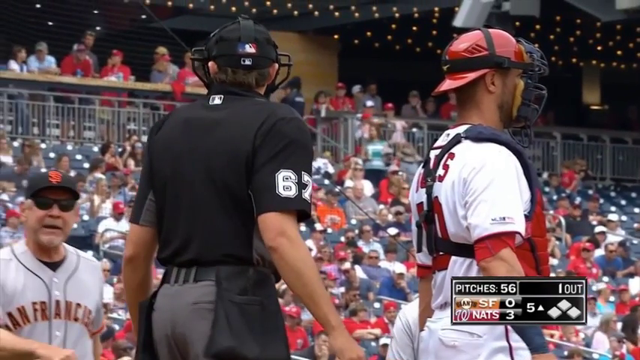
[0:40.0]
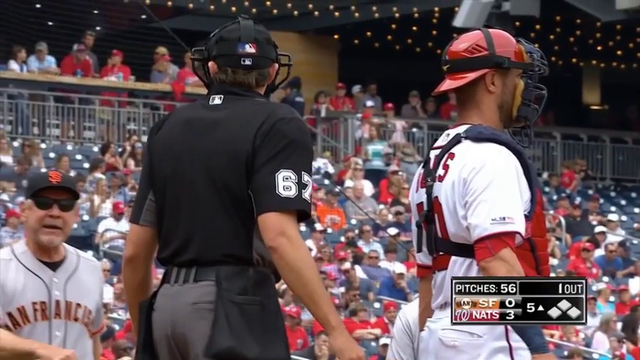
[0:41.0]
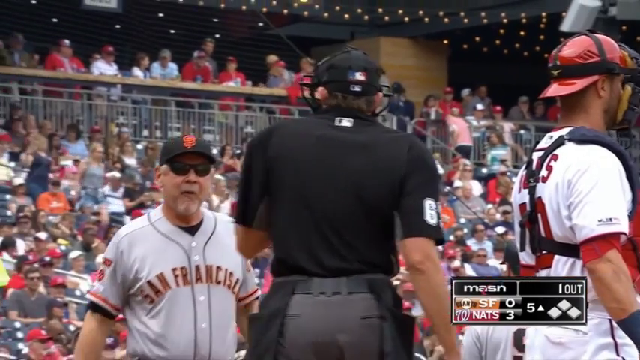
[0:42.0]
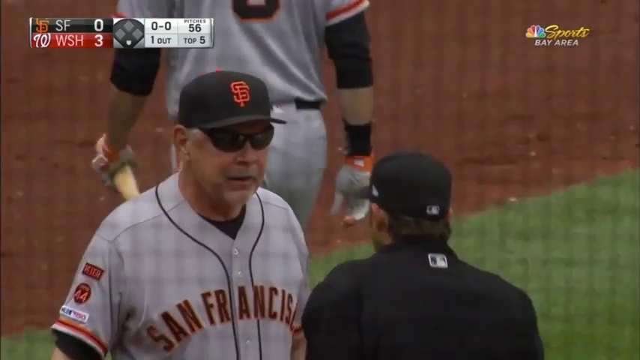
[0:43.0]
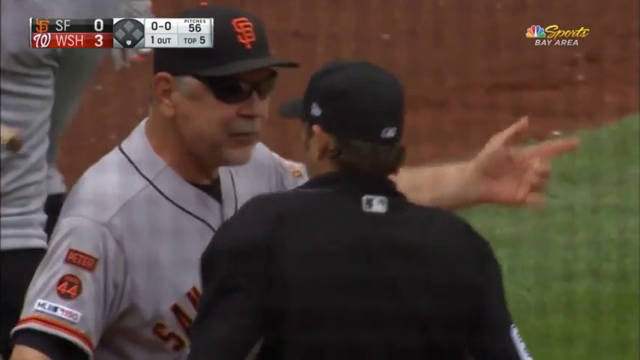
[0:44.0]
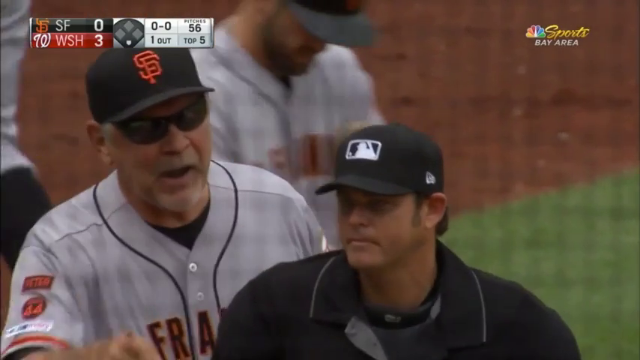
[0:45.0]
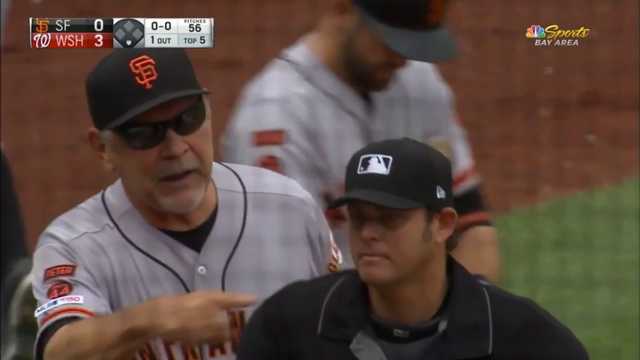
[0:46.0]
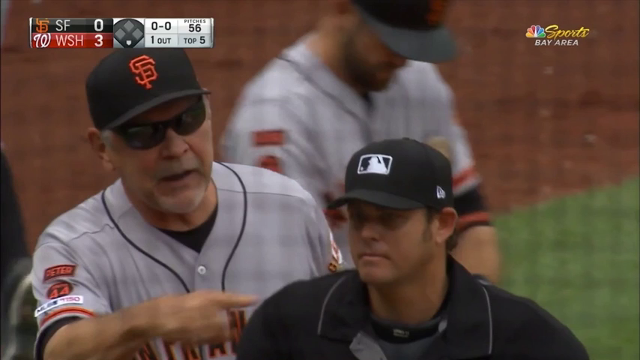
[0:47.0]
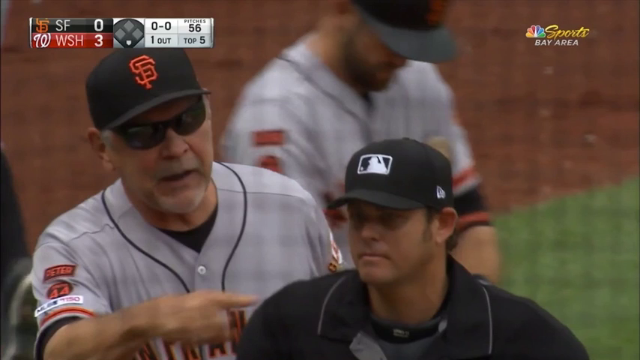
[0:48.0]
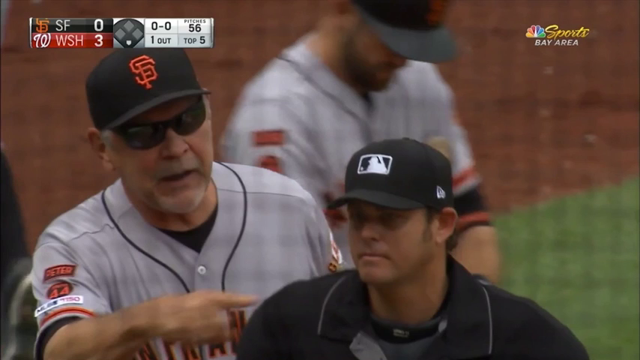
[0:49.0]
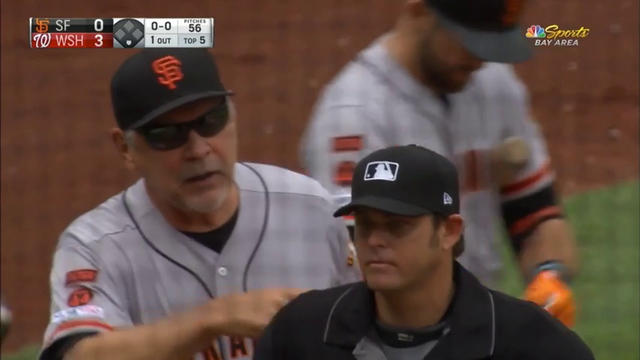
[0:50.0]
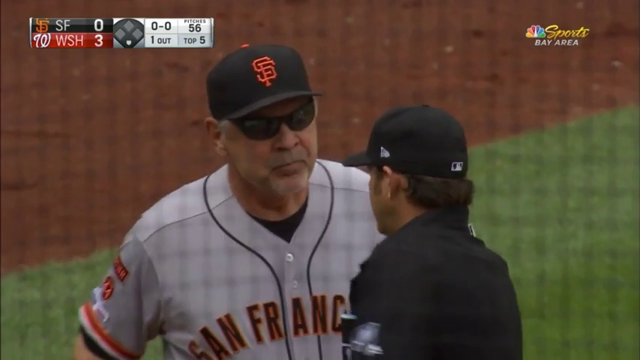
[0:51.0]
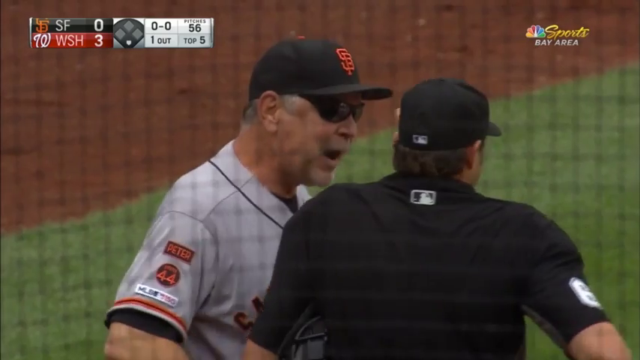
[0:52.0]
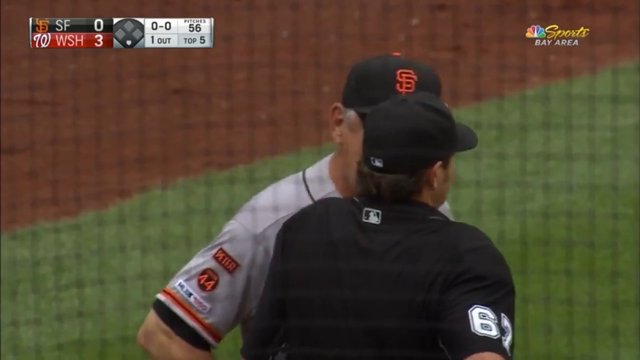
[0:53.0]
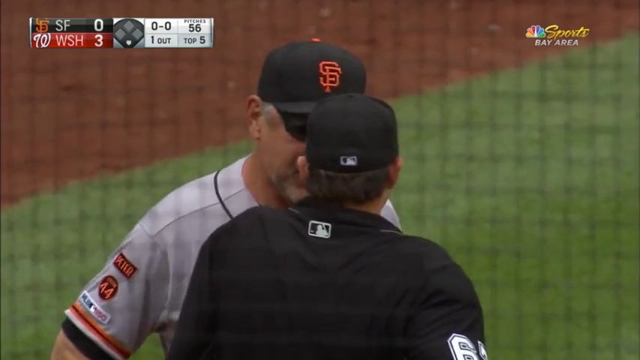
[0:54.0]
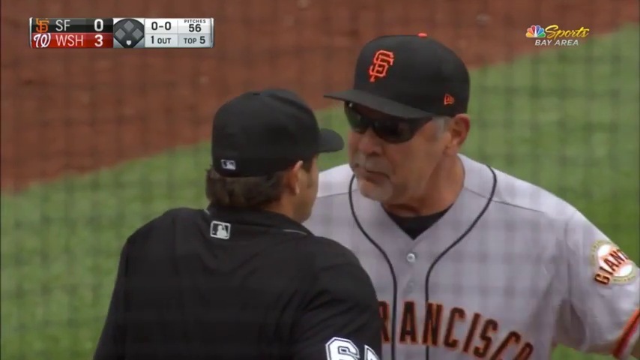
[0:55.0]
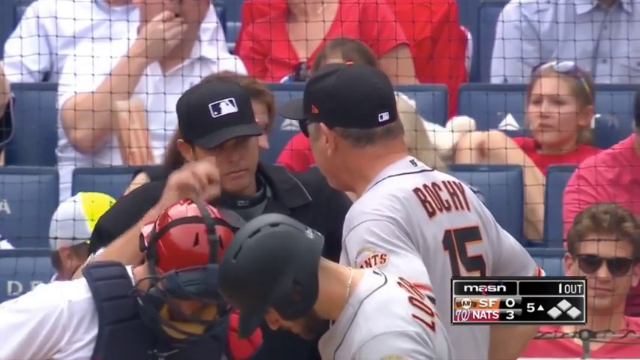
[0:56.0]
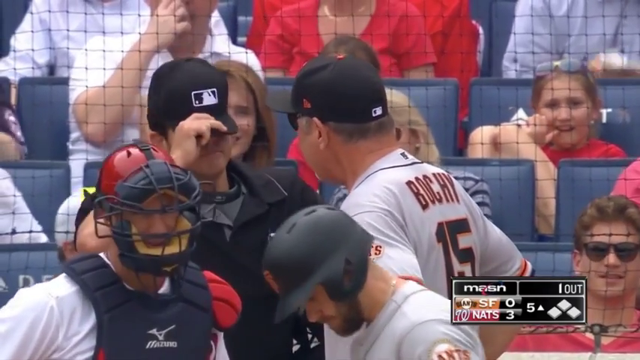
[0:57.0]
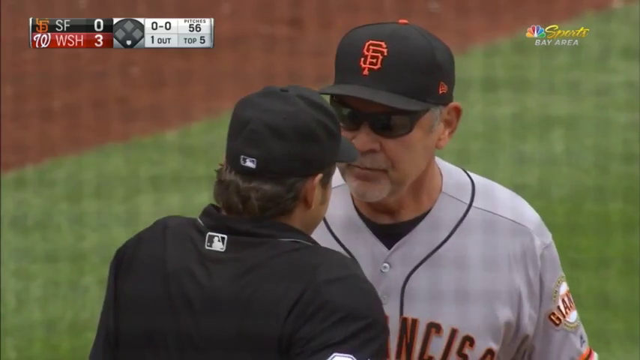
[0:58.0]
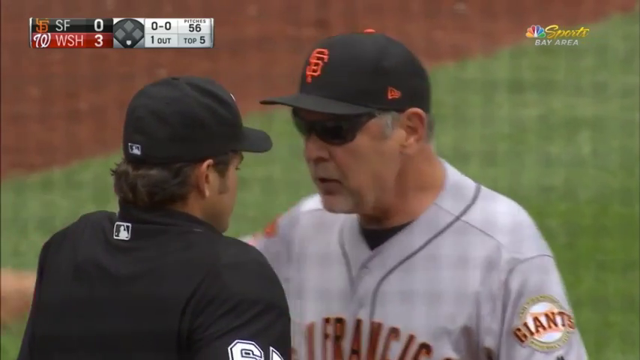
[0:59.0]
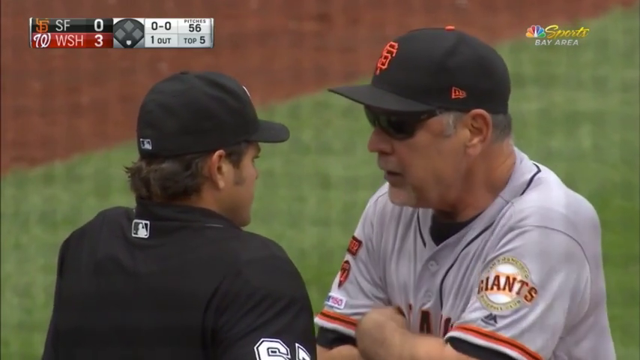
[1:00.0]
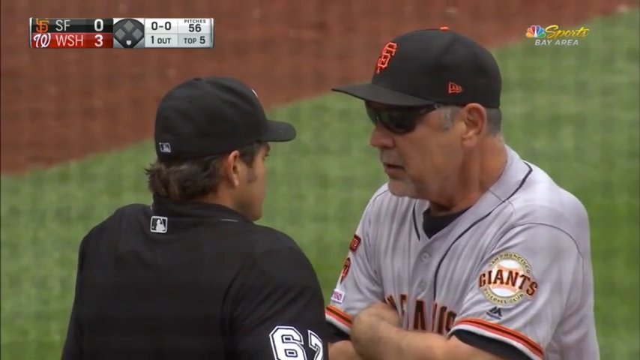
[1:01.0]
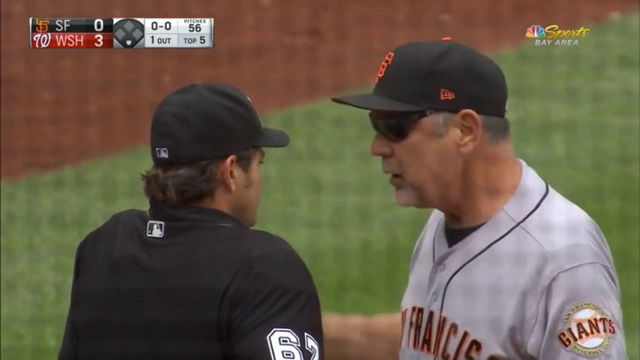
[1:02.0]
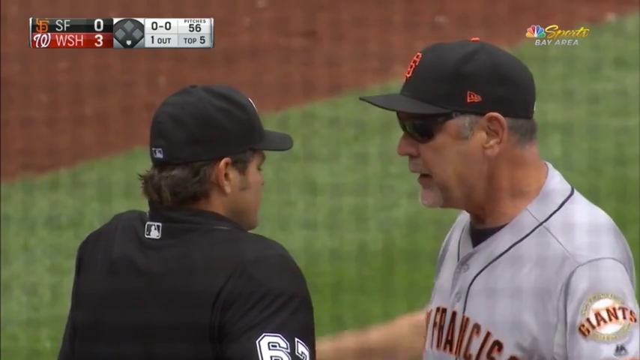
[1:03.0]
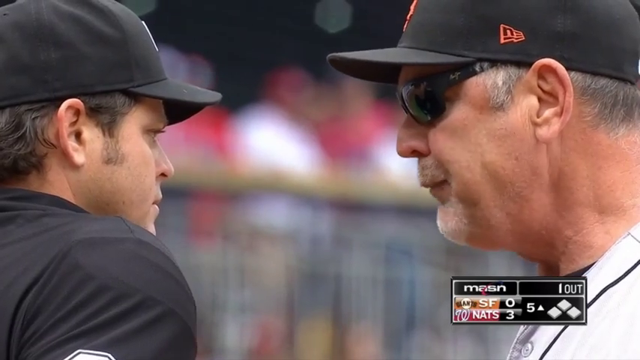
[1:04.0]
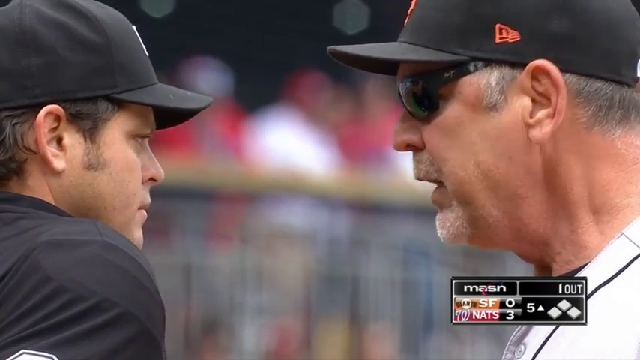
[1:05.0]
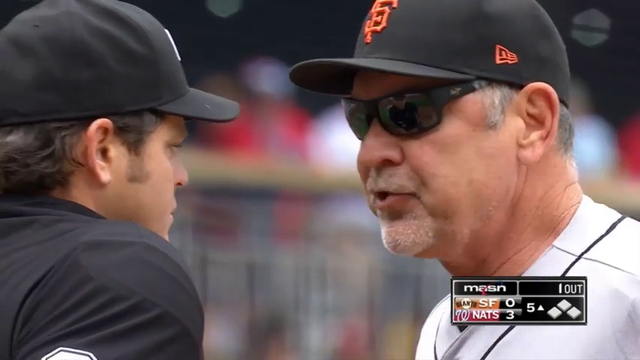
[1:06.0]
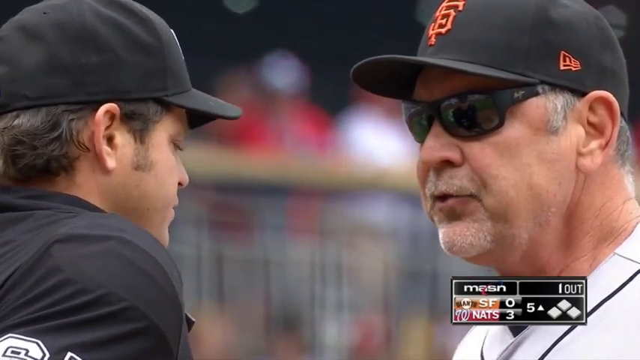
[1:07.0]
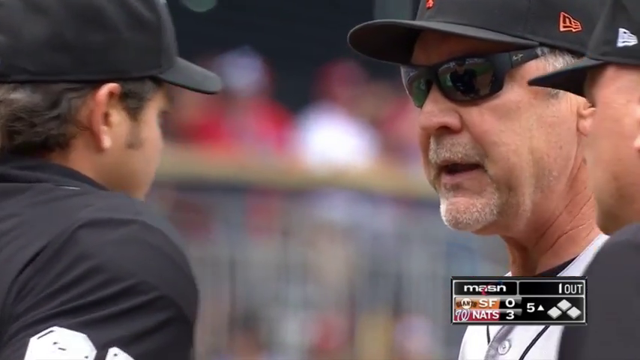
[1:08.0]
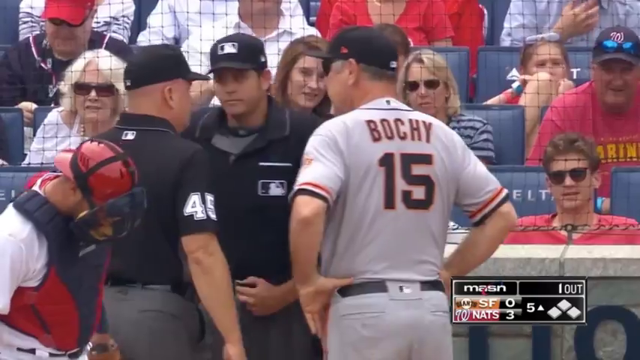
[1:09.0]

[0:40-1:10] Somebody from the San Francisco team goes up to the person in the black shirt, apparently the referee, looking unhappy and talking very close to his face. He keeps talking and crosses his arms. Another man joins them and then walks away. The referee wears a hat and seems to move his hand in the air. The score is still San Francisco Giants 0, Nats 3. Another person for the Giants wears a hat or helmet and a protector on his chest.